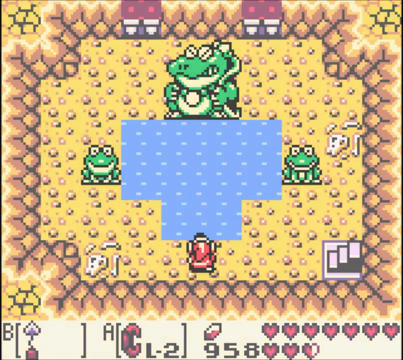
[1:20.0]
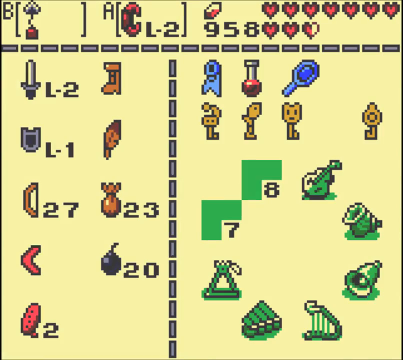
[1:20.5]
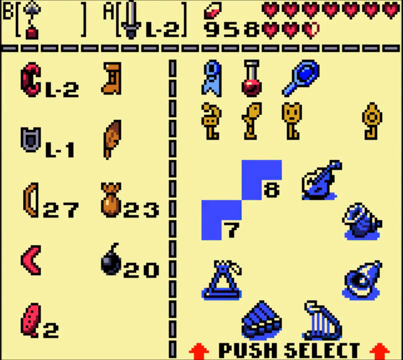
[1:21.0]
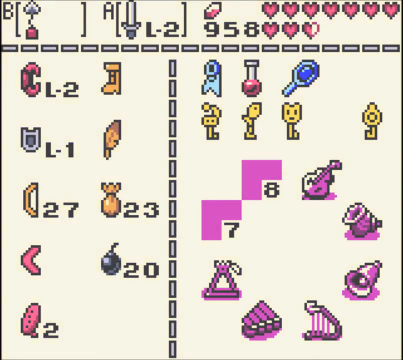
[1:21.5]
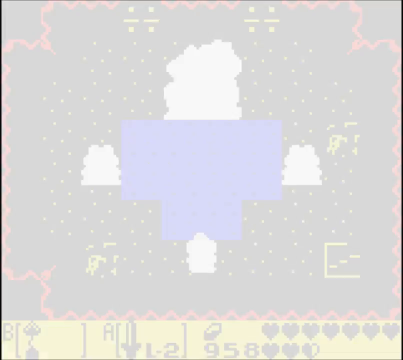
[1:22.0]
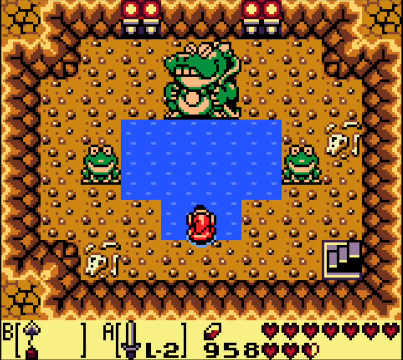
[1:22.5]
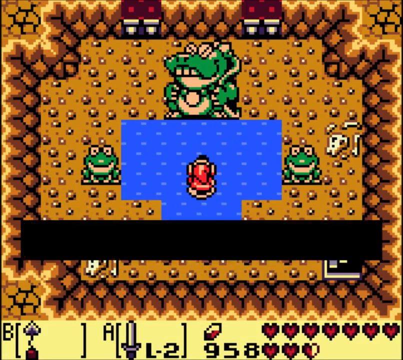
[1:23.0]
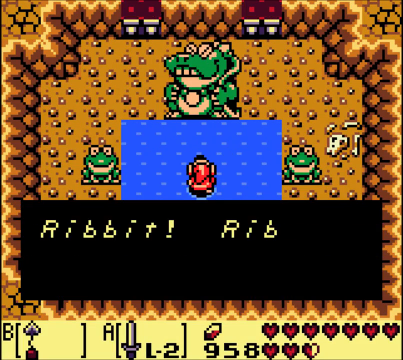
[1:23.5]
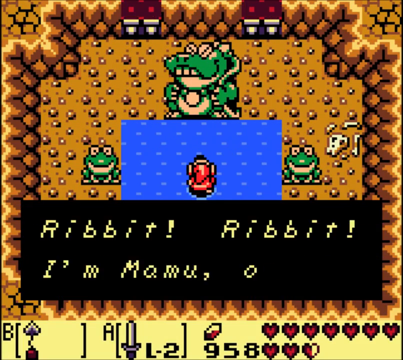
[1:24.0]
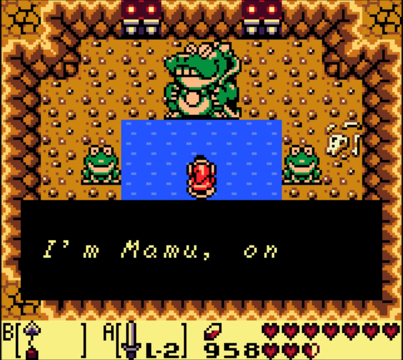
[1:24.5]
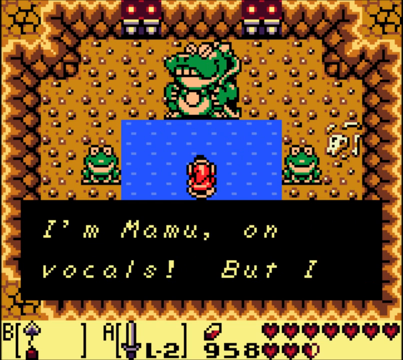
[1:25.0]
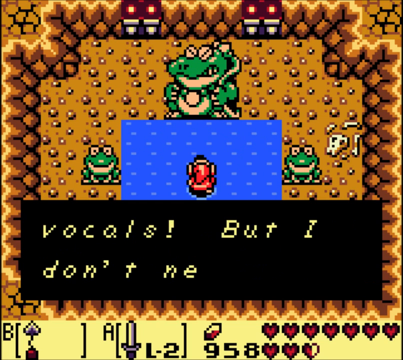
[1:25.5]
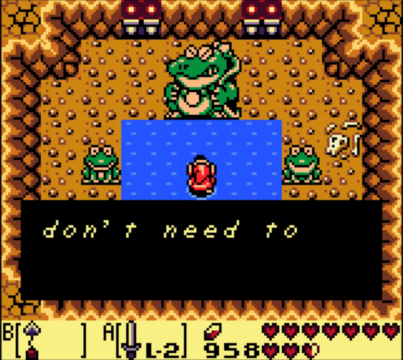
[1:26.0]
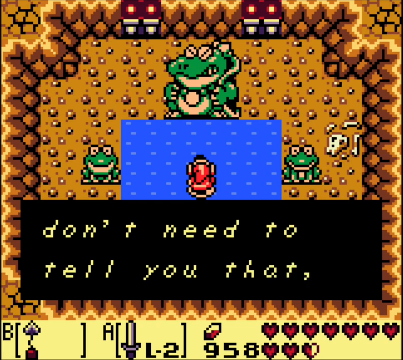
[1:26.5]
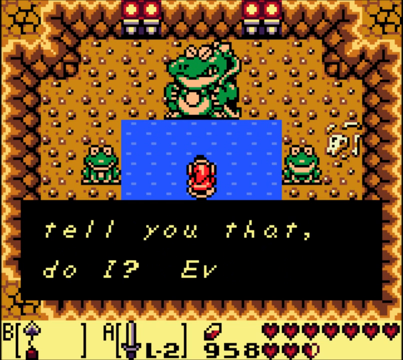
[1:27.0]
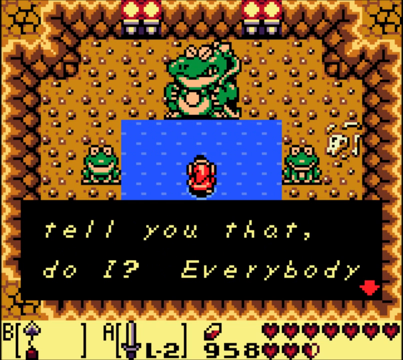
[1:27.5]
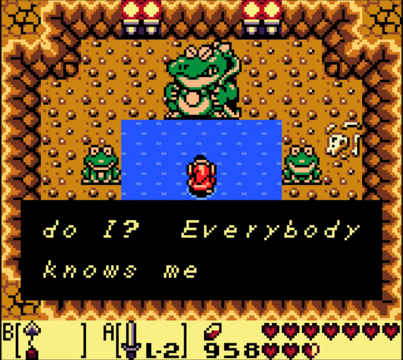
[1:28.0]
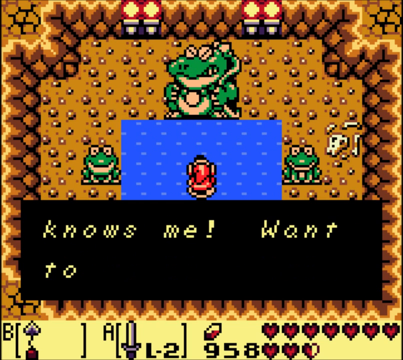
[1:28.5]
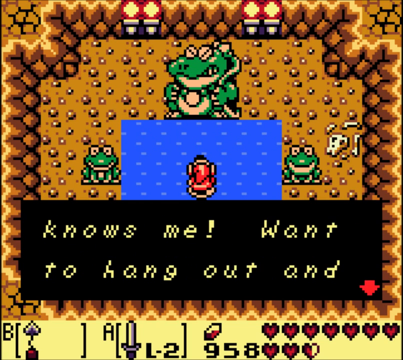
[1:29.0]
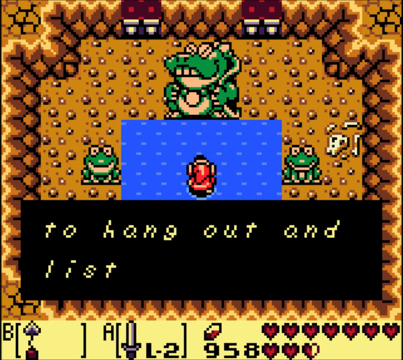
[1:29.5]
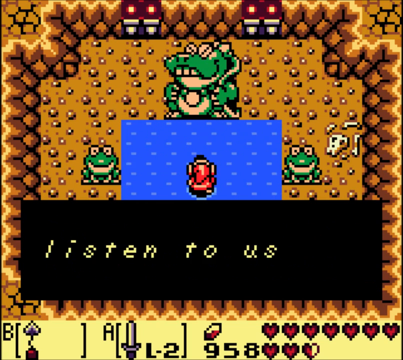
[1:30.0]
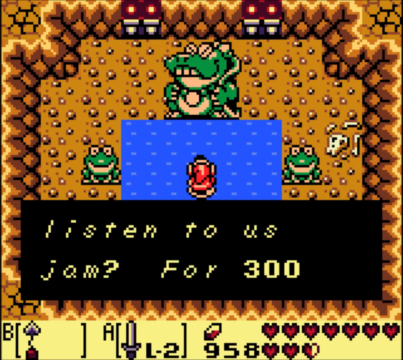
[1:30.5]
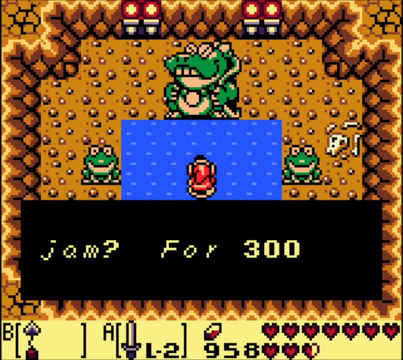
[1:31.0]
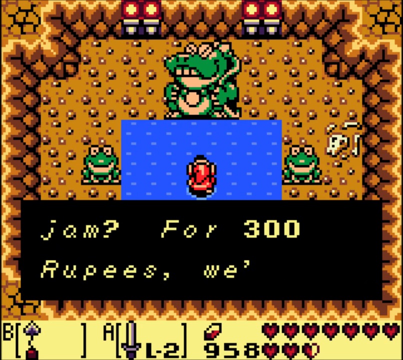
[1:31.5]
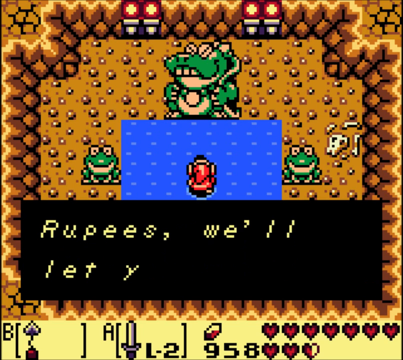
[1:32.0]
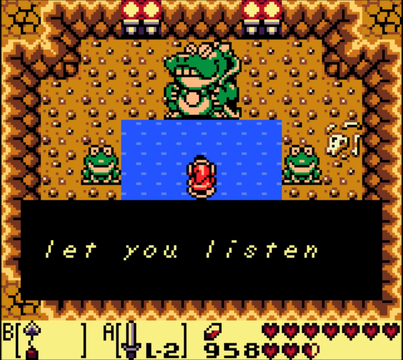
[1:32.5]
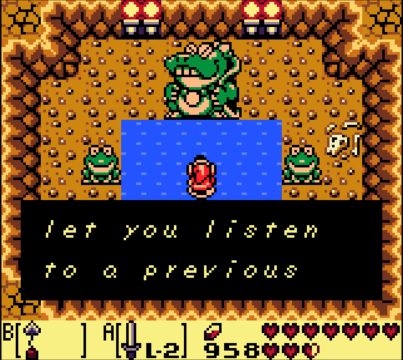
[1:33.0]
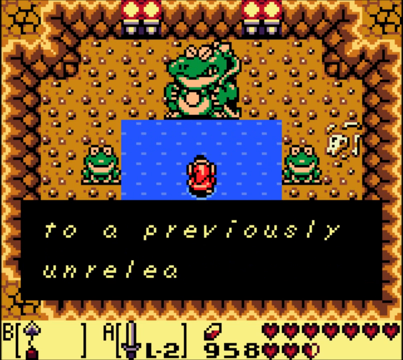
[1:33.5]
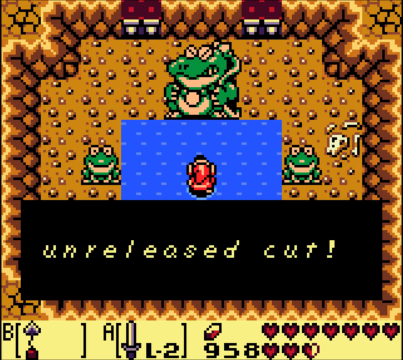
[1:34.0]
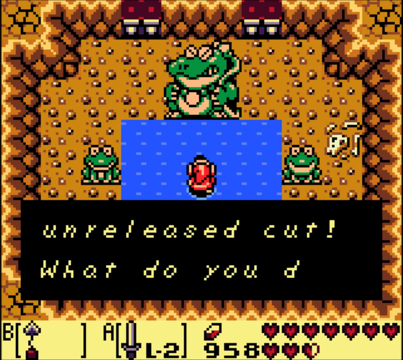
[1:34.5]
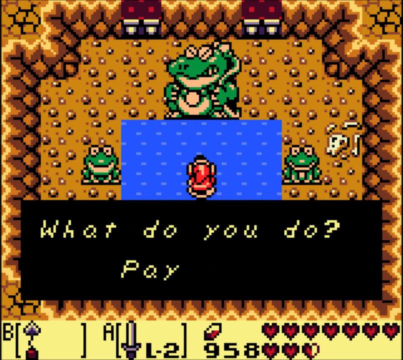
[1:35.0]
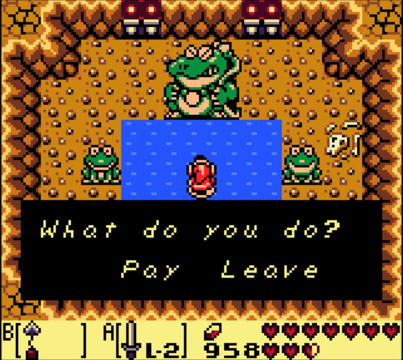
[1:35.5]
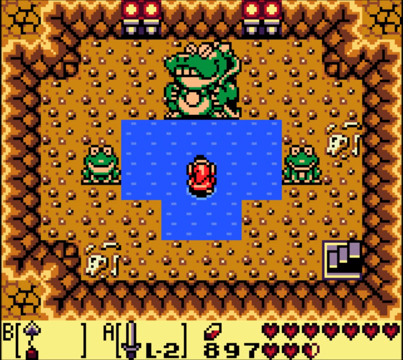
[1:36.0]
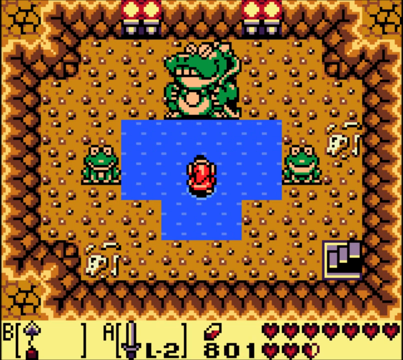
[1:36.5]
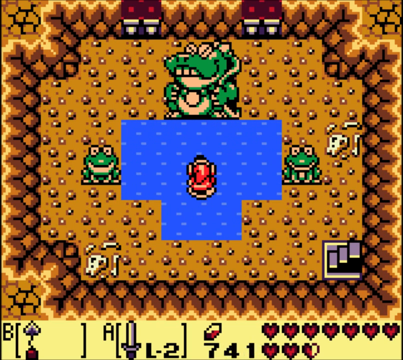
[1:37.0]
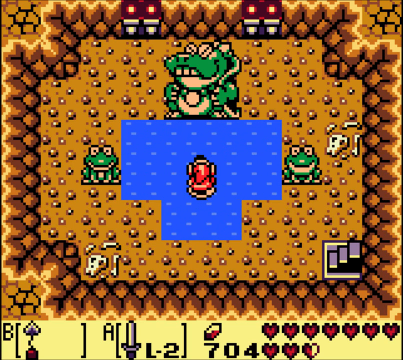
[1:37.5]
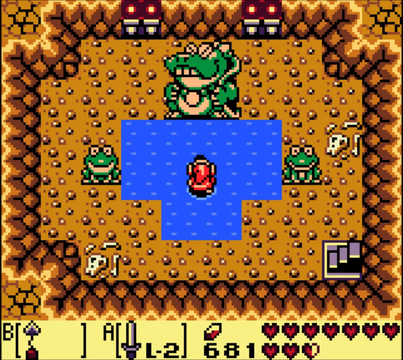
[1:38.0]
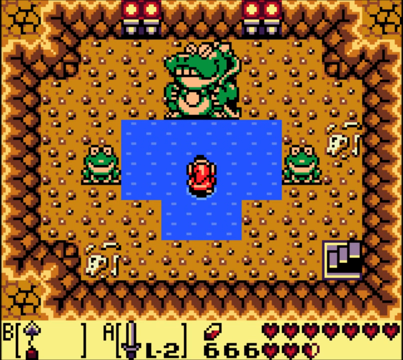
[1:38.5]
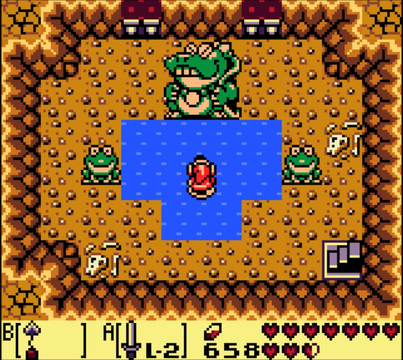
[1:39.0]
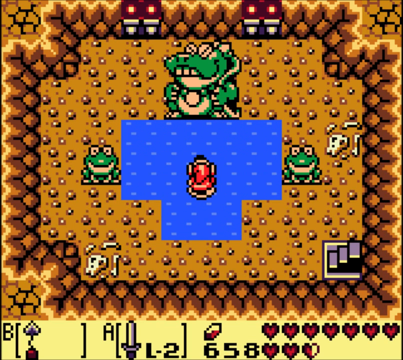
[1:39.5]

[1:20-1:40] The character is in what looks like a cave area, surrounded on all sides by rocks. There are two skulls, one in the bottom left of the cave and one along the right-hand side about the middle, and three steps lead down into the cave in the bottom right. The red pixelated character looks forward at a T-shaped lake. At the head of the lake is a giant frog-god-like statue or creature, and on each side of the lake is a green frog, making three frogs in total: two smaller ones and one large god-sized one. The view briefly pauses on what might be an inventory or character screen, with indicators such as L2 and L1 and drawings of various items with numbers beside them; this flashes up very briefly. There are also a number of heart symbols at the top of the screen and the number 958. The character paddles through the water towards the giant frog. Words appear: "ribbit, ribbit, I'm Mamoo on vocals, but I don't need to tell you that do I? Everyone knows me. Want to hang out and listen to us jam for 300 rupees? We'll let you listen to a previously unreleased cut." An option appears for the character to either pay or leave.